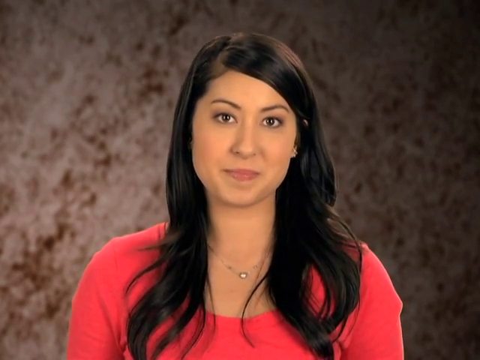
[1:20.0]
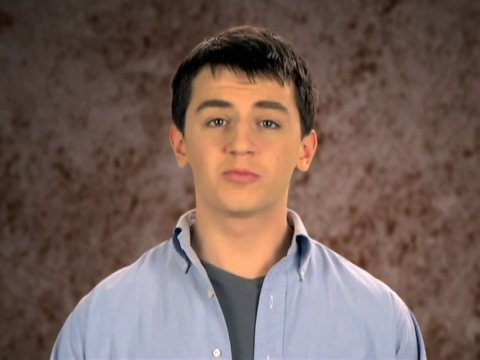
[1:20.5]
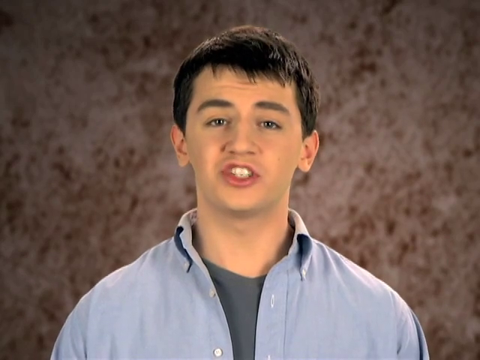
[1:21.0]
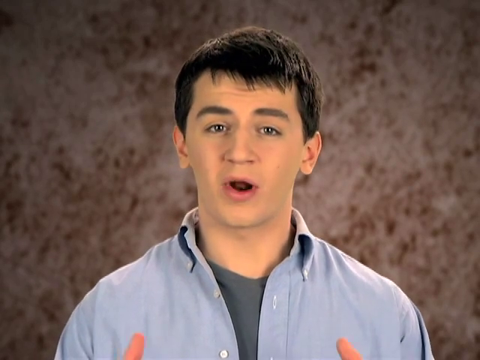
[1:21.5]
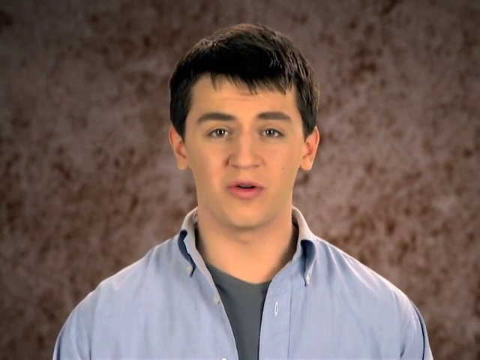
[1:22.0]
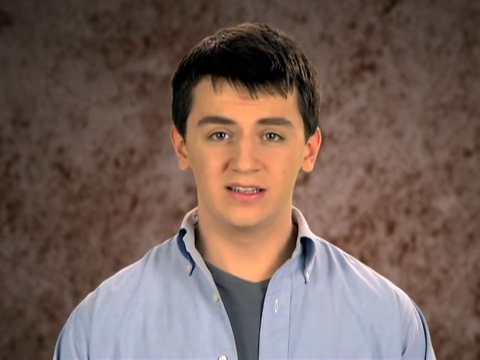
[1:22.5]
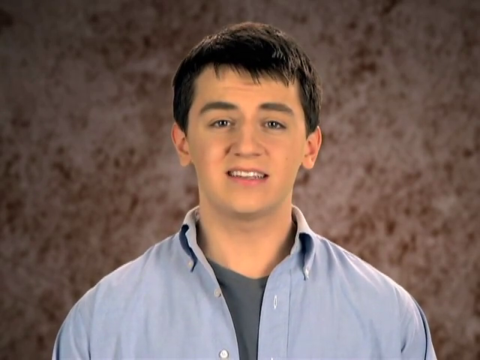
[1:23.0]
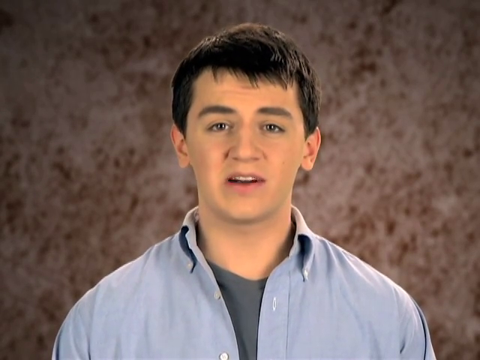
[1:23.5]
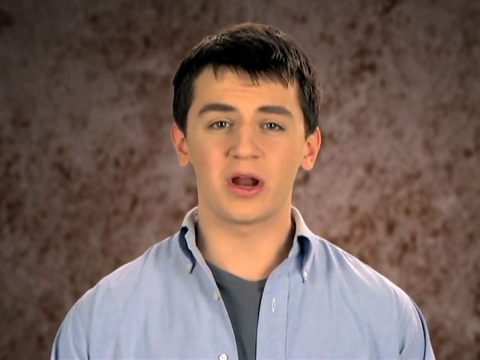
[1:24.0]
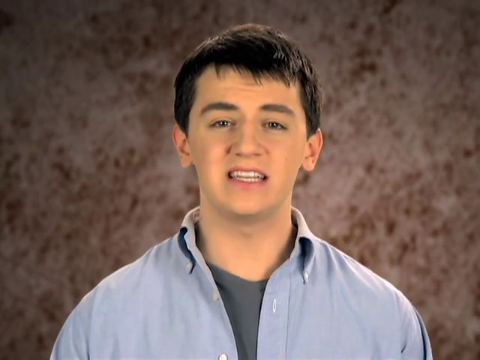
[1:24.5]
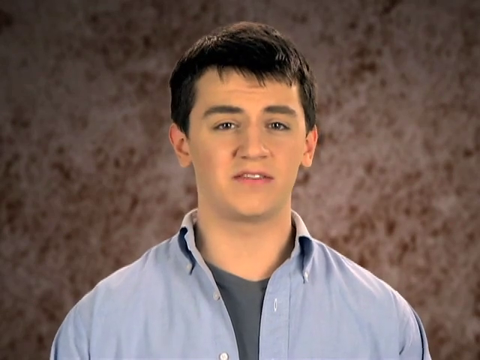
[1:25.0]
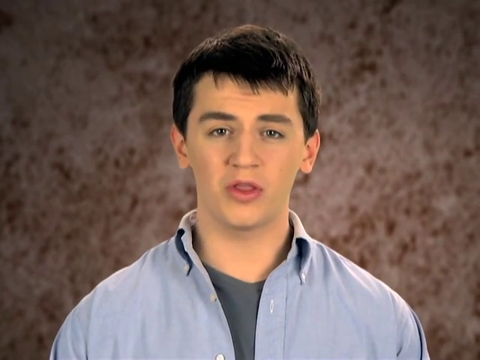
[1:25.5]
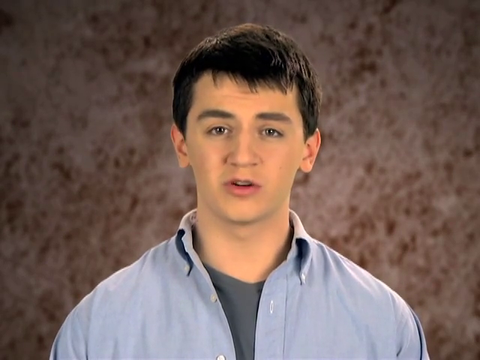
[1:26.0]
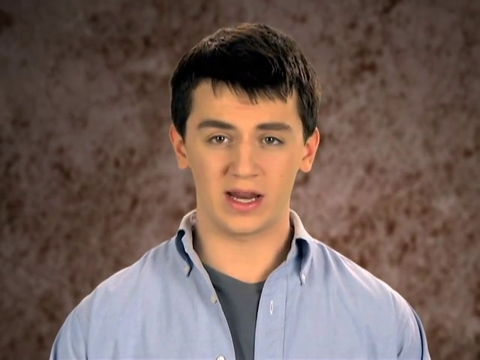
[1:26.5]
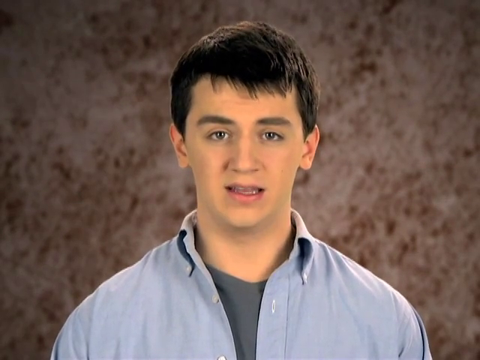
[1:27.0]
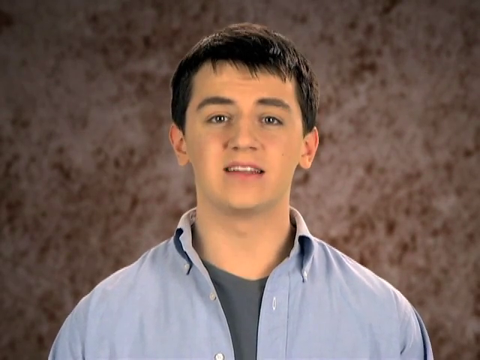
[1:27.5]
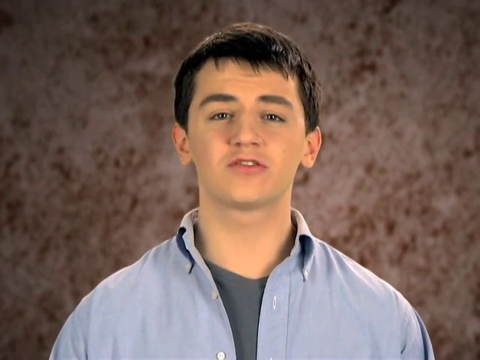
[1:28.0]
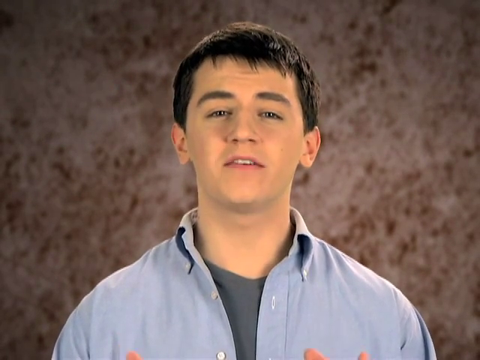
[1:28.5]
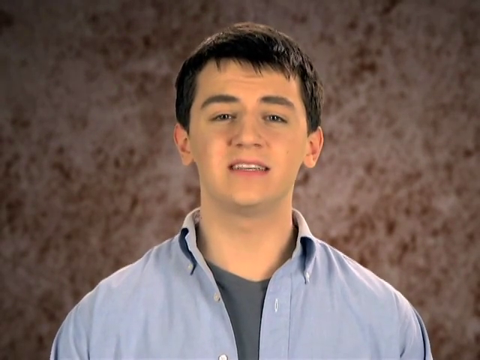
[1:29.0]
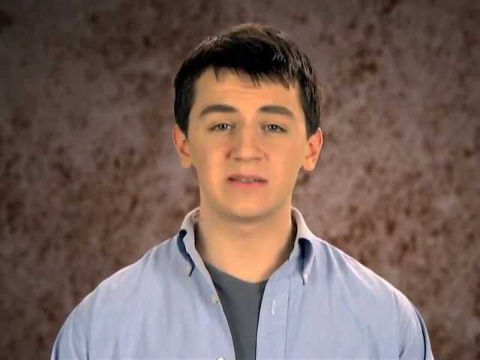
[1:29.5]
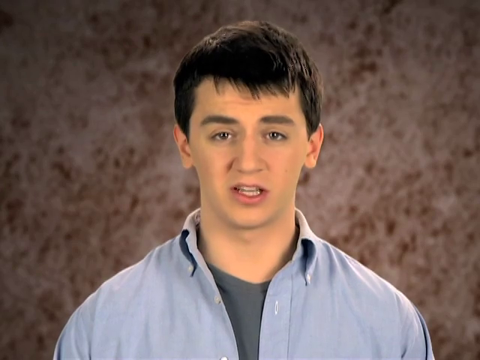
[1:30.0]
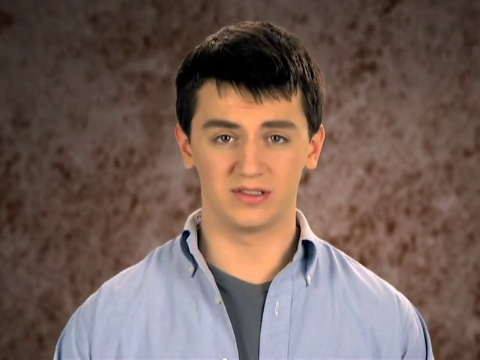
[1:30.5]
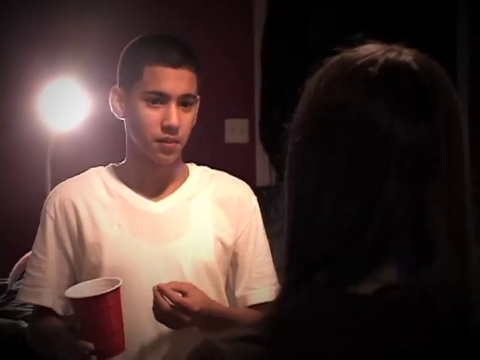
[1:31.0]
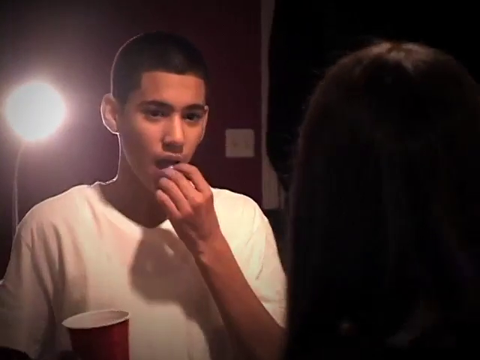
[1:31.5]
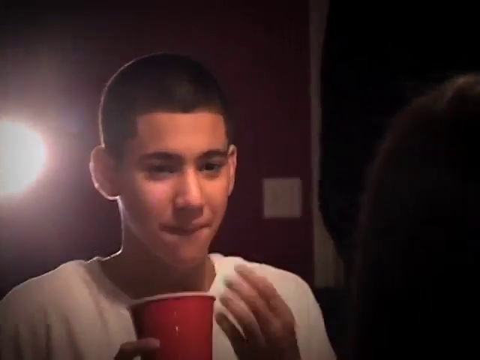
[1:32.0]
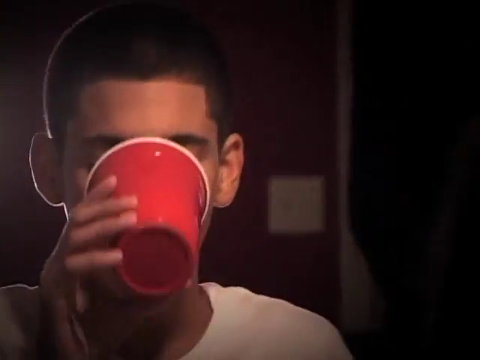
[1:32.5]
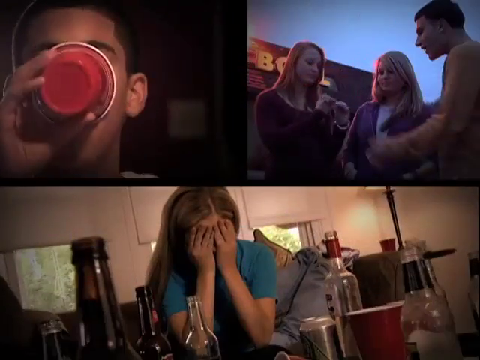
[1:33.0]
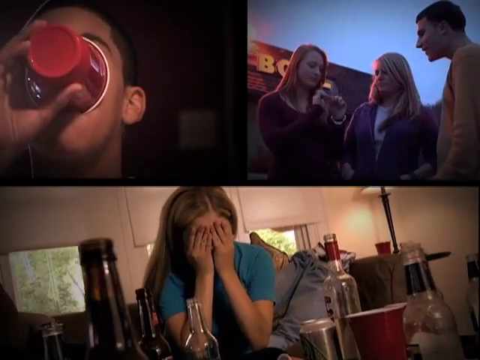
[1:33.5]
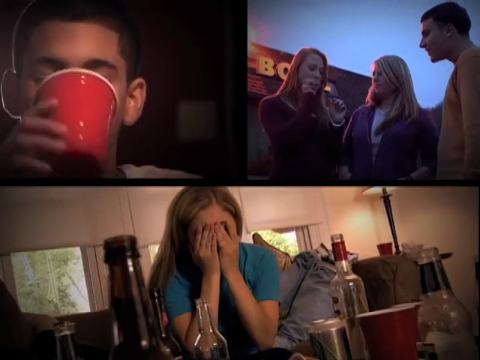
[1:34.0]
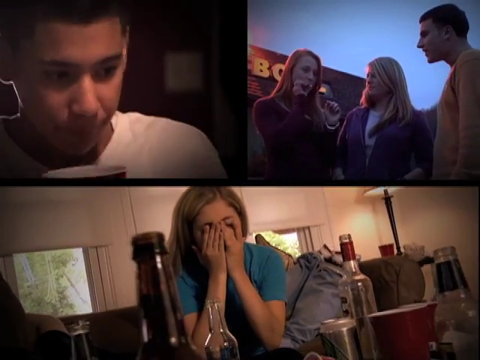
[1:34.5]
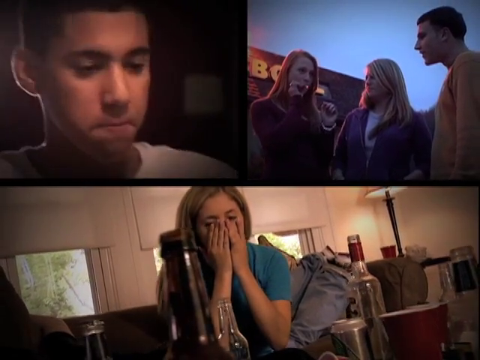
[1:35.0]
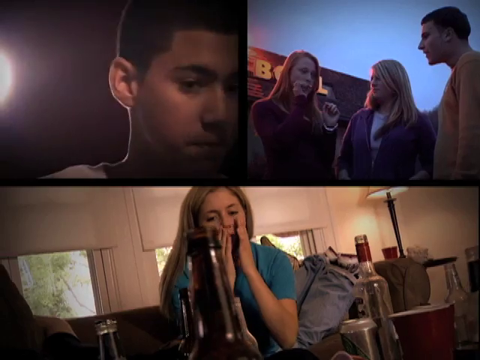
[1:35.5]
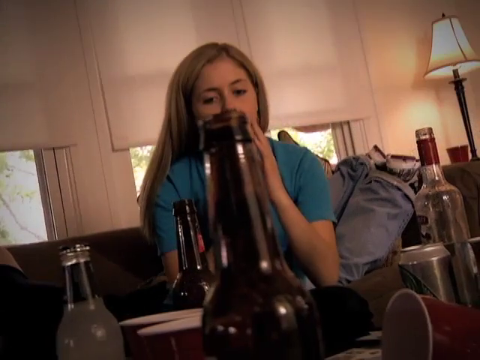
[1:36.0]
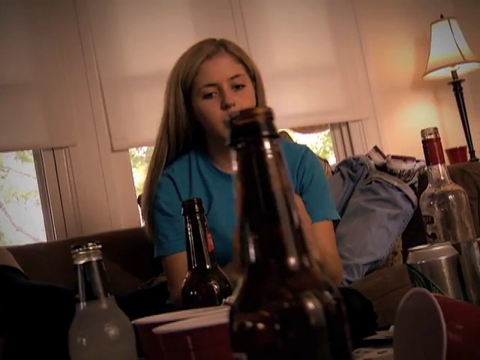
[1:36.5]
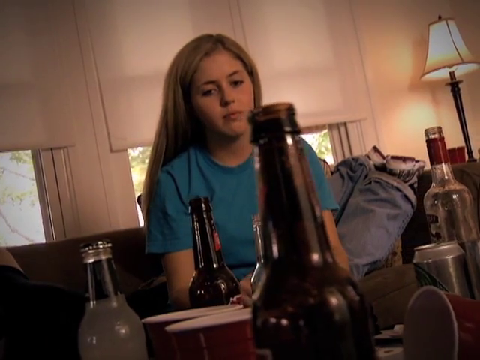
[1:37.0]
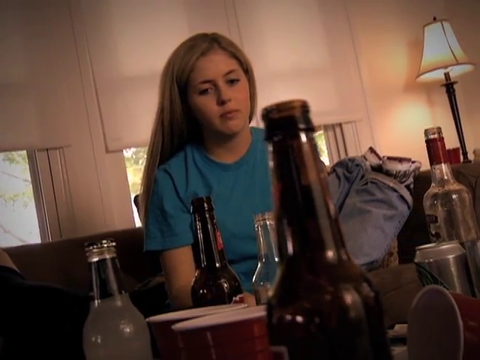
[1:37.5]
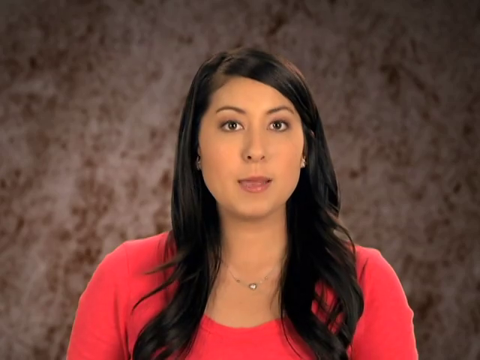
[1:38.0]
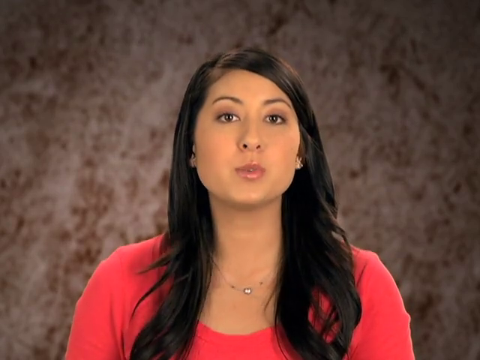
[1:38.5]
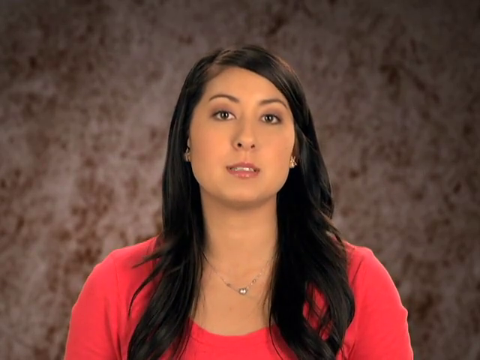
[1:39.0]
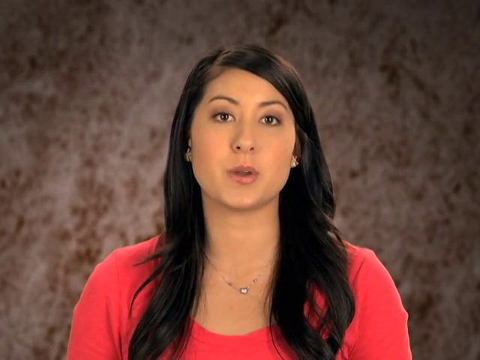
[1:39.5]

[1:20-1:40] A Caucasian woman with dark brown-black hair, tan skin and brown eyes, wearing a peach-colored top and a delicate necklace, looks at the camera against an off-white and dark brown splotchy background. The view then pans to a Caucasian man with short brown hair and brown eyes, wearing a dark gray t-shirt under a light blue button-up shirt. He looks at the camera and speaks animatedly to it; he is visible from the upper chest up, and his hands are occasionally visible as he speaks. Next, a male teenager with short brown hair, wearing a white t-shirt, puts something that looks to be a pill in his mouth as he drinks from a red plastic solo cup. To the right of him is a group of teenagers, one male and two female, who appear to be outside at dusk smoking a joint. Beneath that is a Caucasian woman with her hands to her face inside a room full of beer and booze bottles; the room has tan walls and several partially covered windows showing that it is daytime outside.